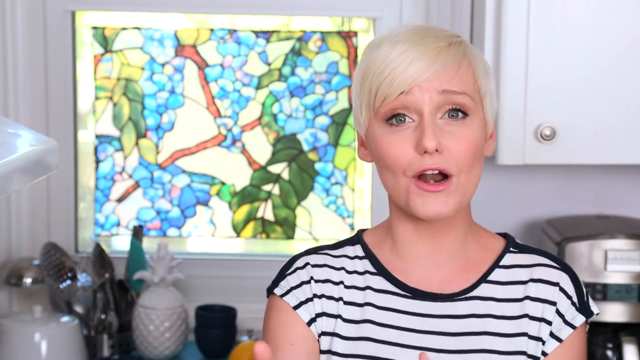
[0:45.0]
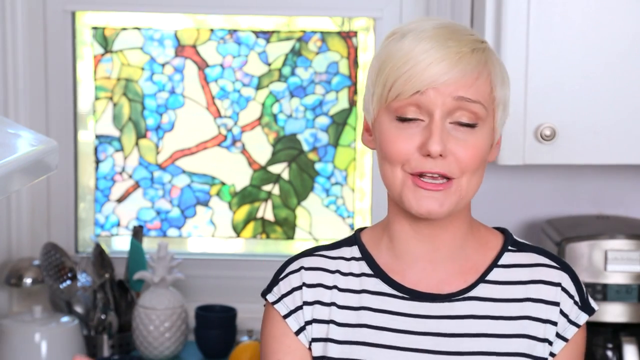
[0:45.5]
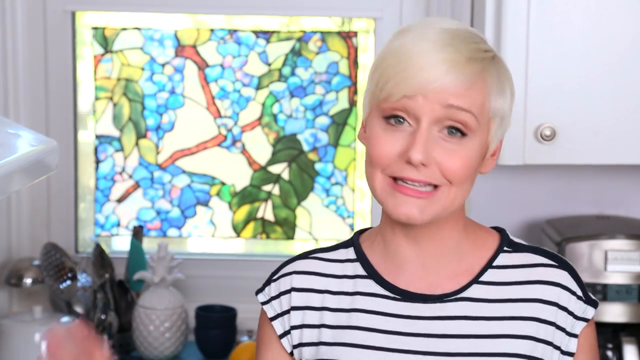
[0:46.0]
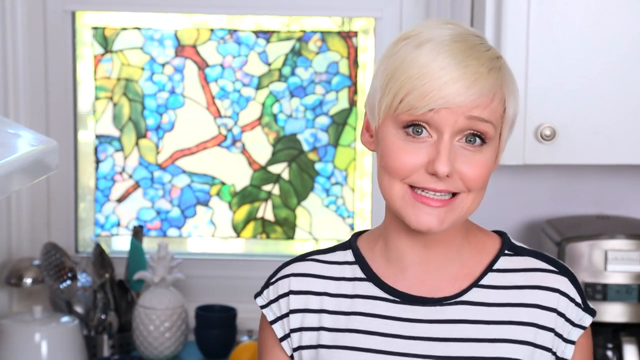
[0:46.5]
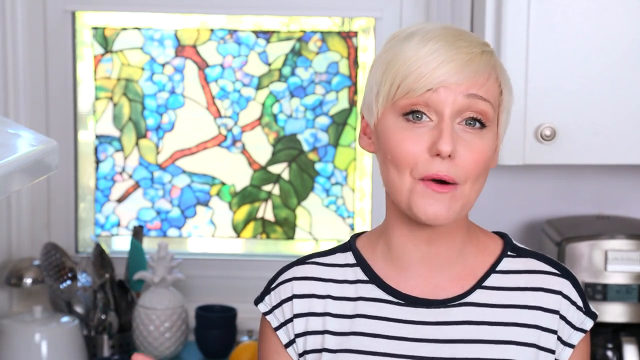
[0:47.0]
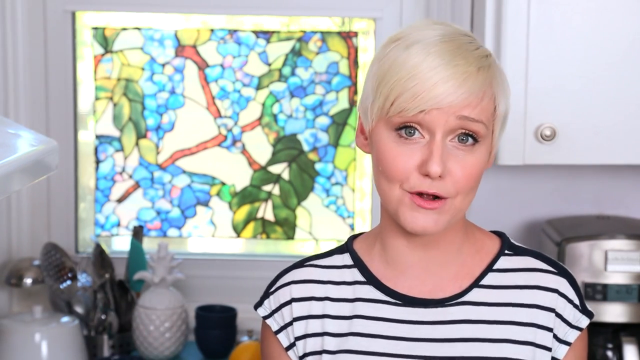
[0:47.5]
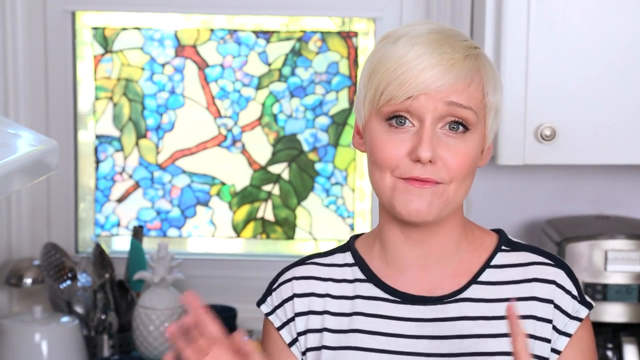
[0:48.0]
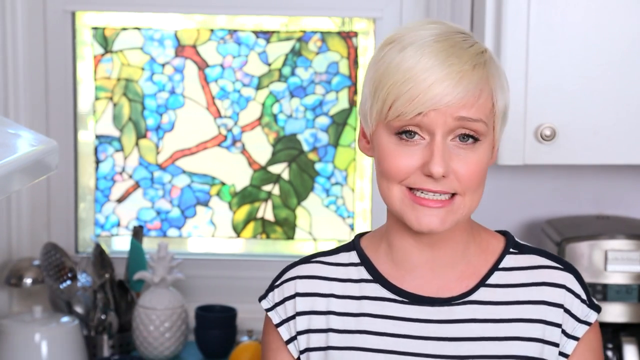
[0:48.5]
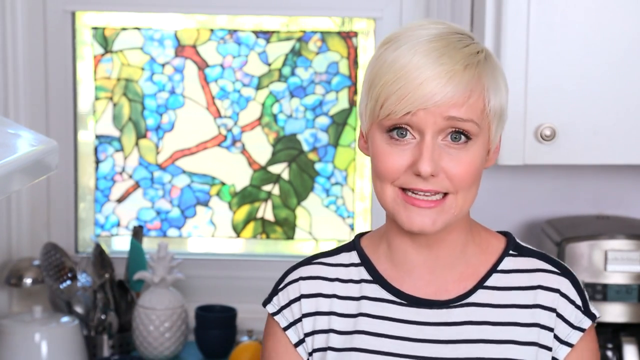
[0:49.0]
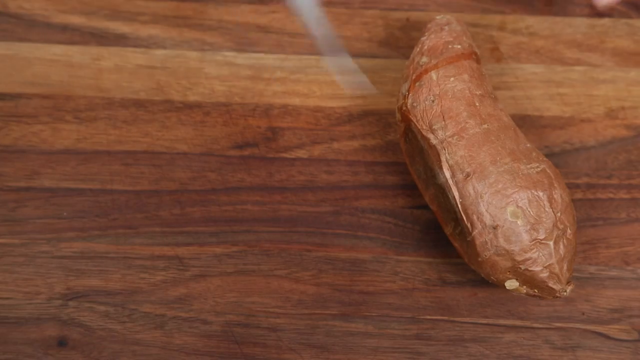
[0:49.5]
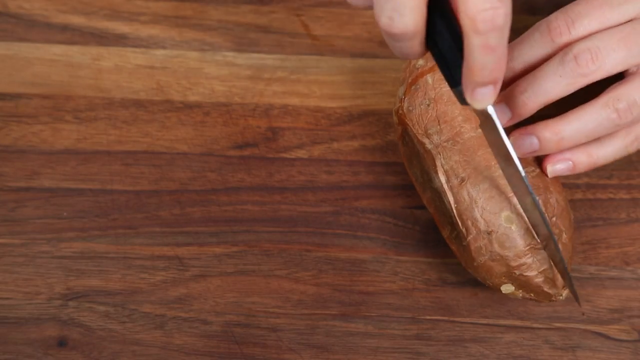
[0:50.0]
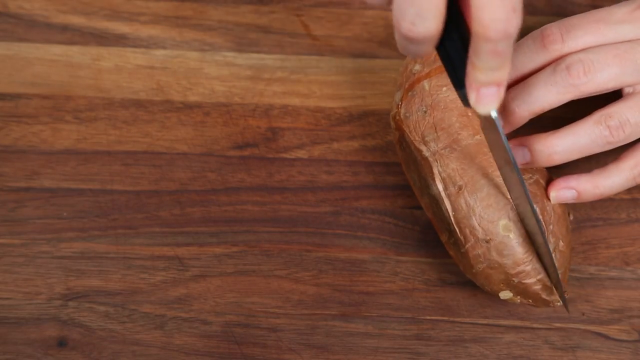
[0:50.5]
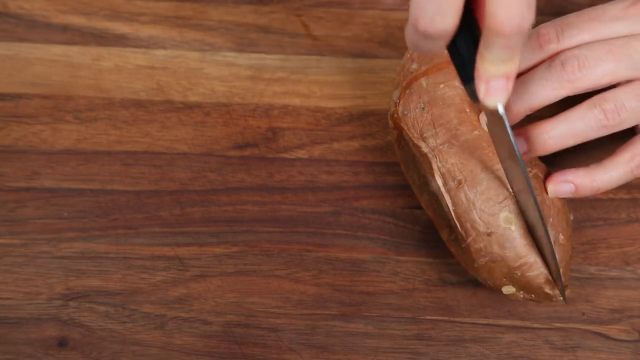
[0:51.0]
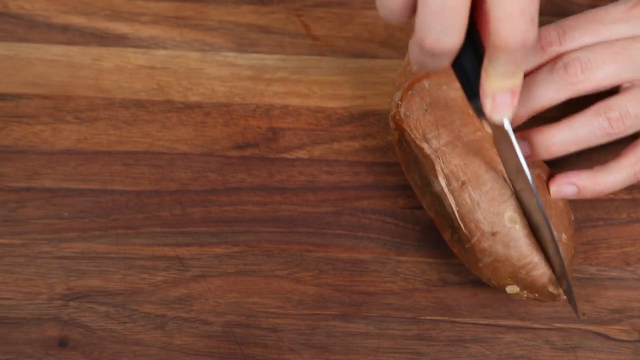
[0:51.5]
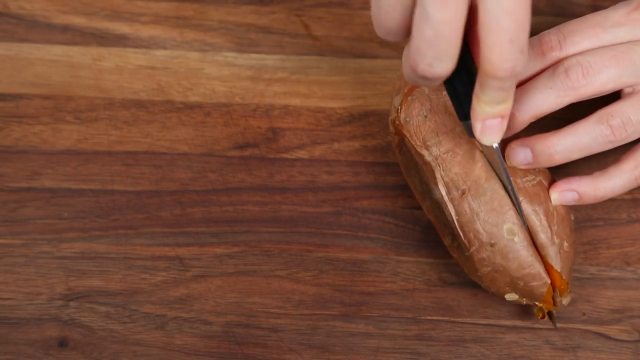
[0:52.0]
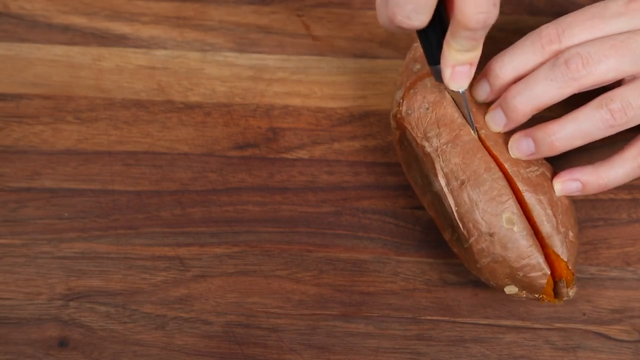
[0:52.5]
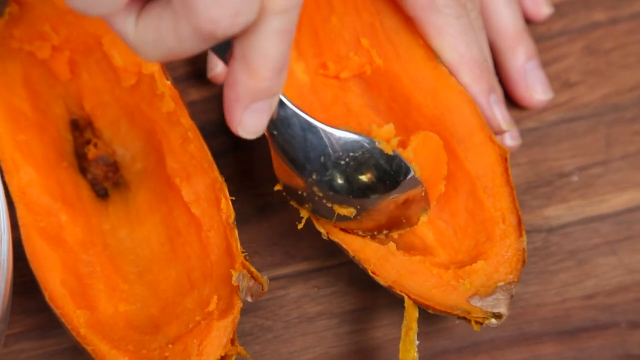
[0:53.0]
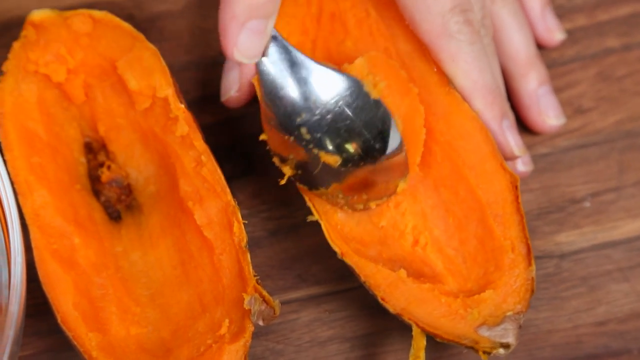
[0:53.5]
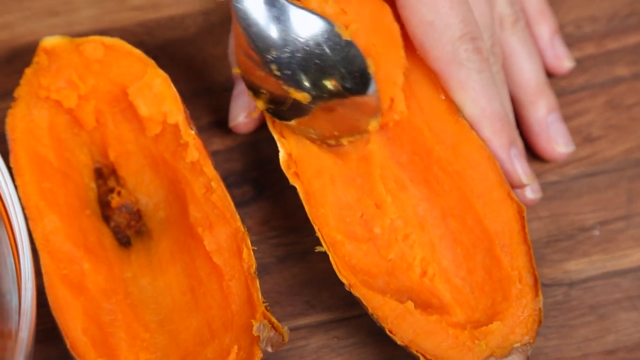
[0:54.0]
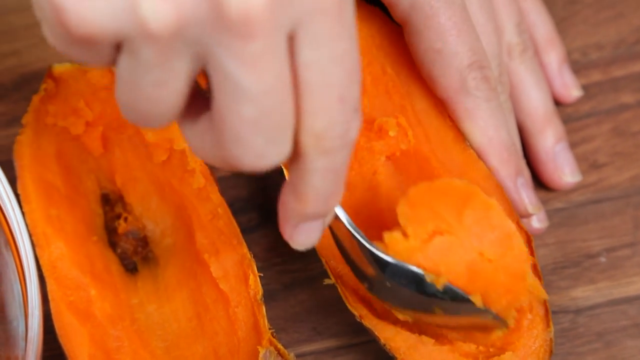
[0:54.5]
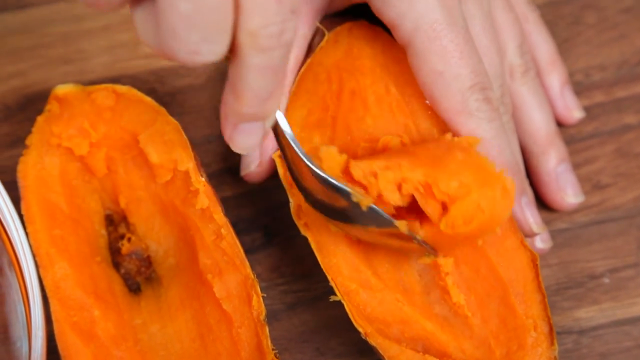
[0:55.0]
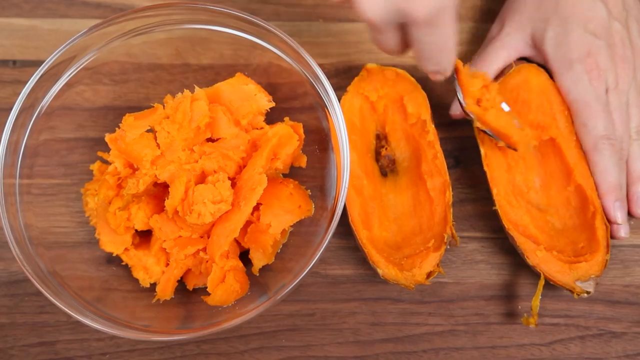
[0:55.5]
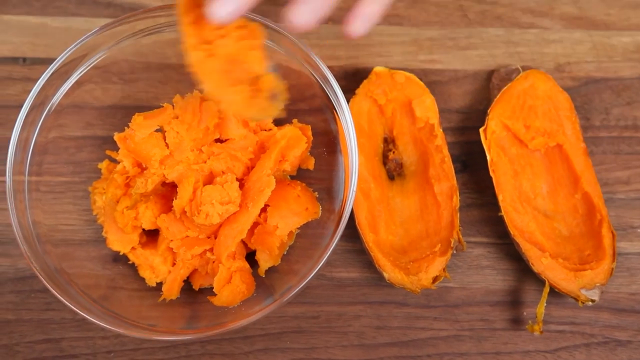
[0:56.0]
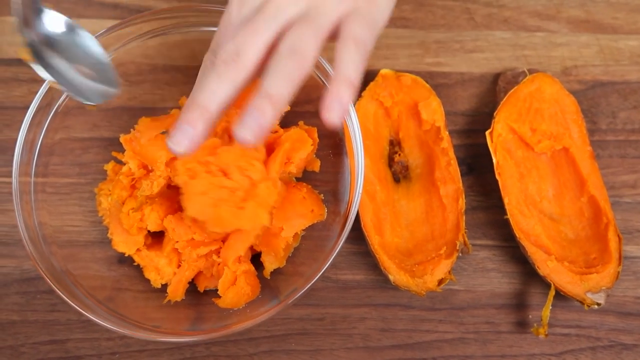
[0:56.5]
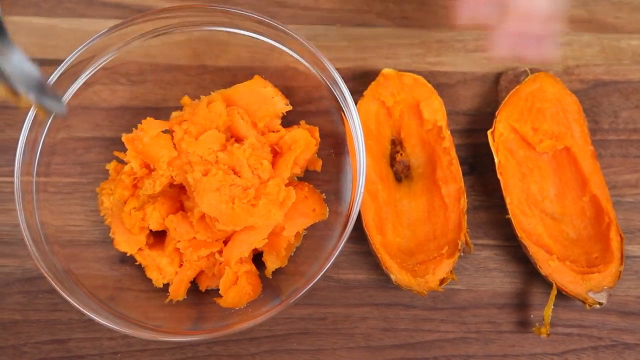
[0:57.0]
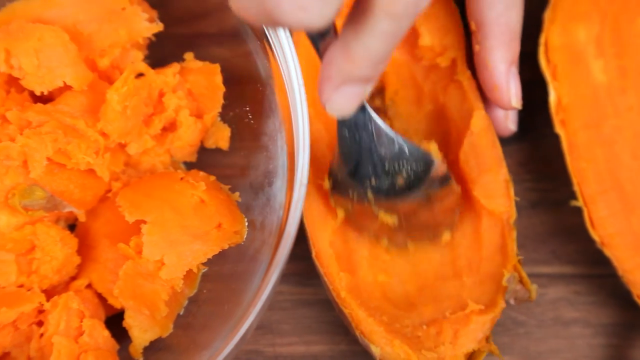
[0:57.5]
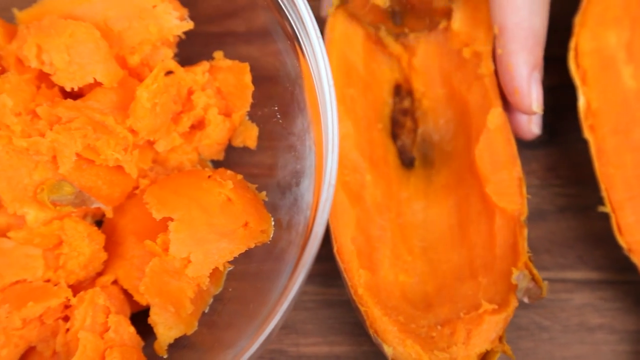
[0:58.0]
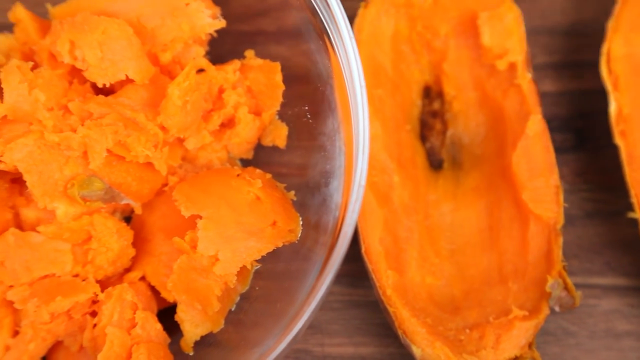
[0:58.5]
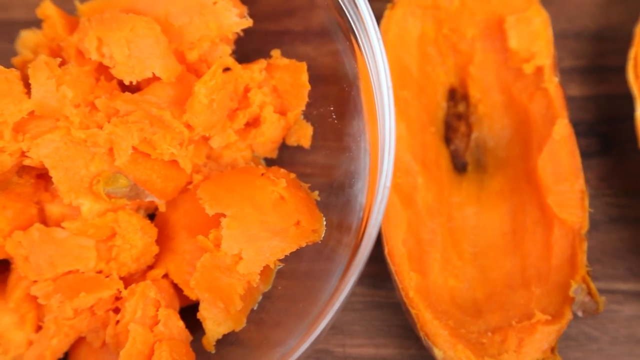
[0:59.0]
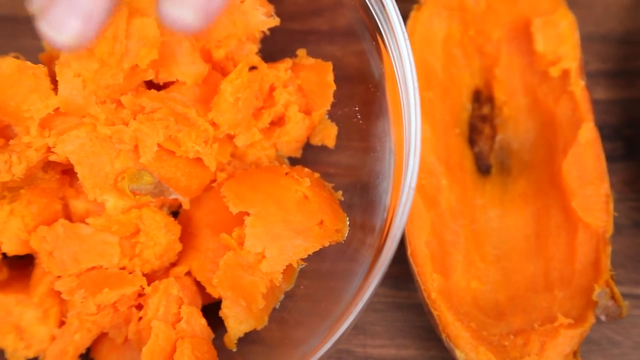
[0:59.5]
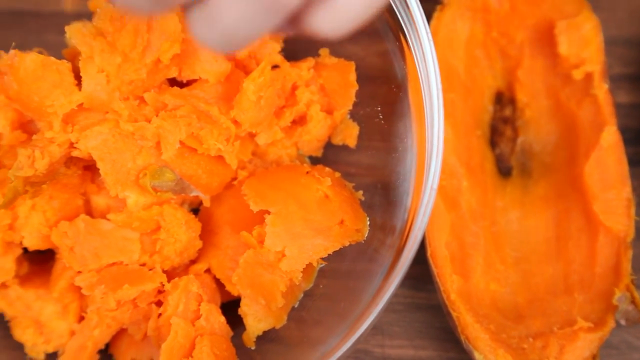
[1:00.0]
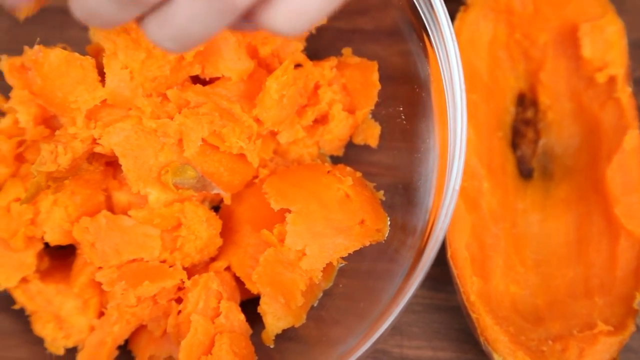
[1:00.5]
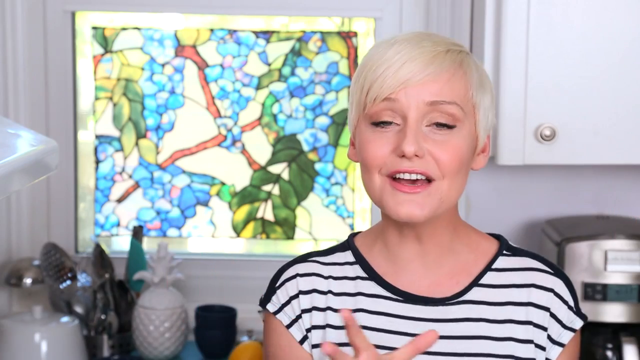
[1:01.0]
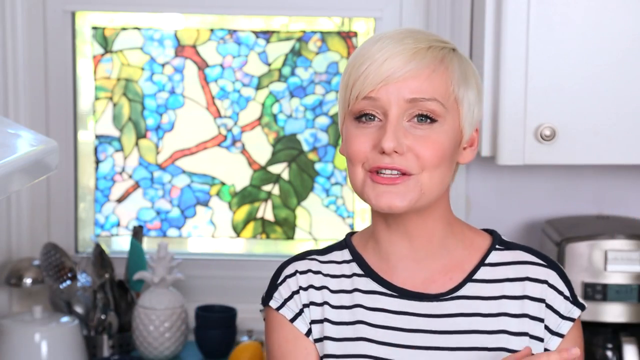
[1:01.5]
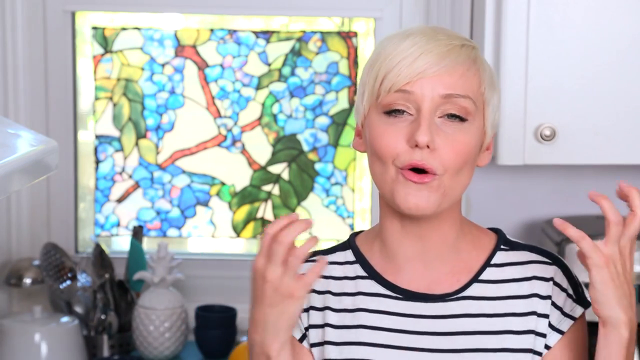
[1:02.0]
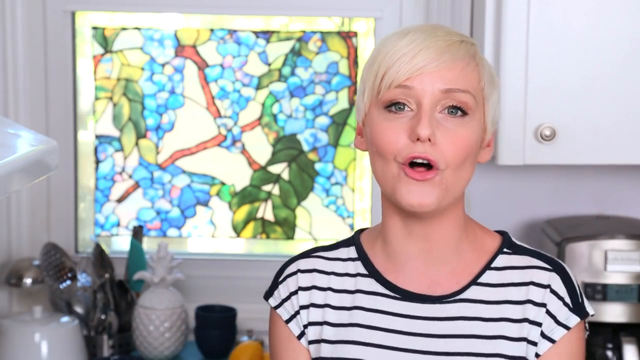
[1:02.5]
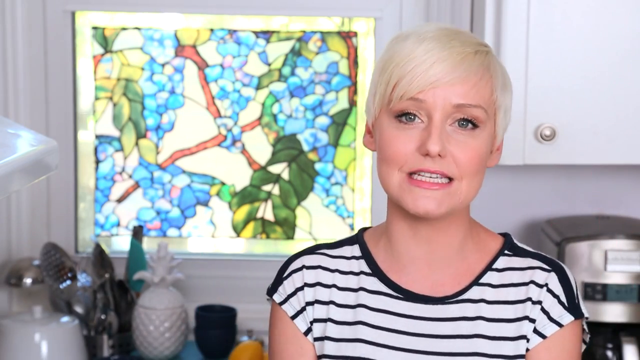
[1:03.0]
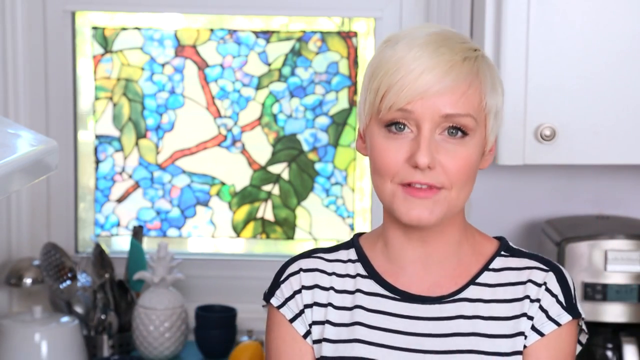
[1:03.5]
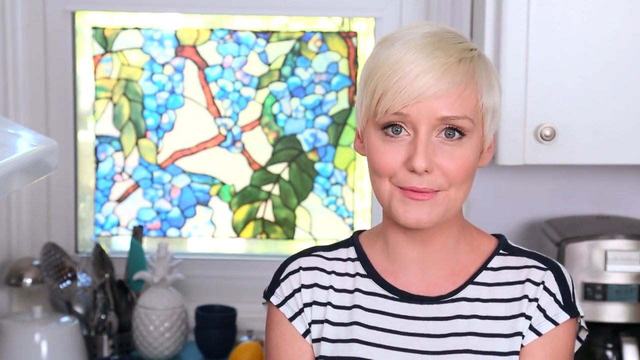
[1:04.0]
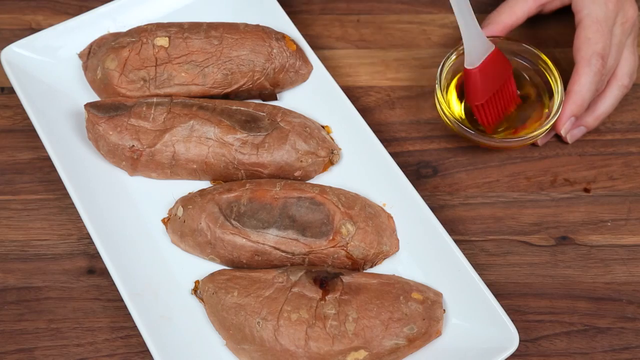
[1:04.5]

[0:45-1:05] The woman appears to continue talking. In the background is some kind of very decorative glass pan that appears to show some sort of blue grape on a tree with some leaves, and cabinets behind her show she is in a kitchen. On the brown table is now one single potato. Gripping a knife with her right hand while her left hand lines up the knife, she cuts slowly through the middle of the potato rather than in one swoop; it appears to be a sweet potato. She then takes a spoon and carves out the inside of the left half, scraping the orange insides into a bowl to the right. The bowl fills with potato insides as she scrapes out both halves to get all the contents out. She then appears to still be talking and explaining something, as if showing a recipe or a way to make something.